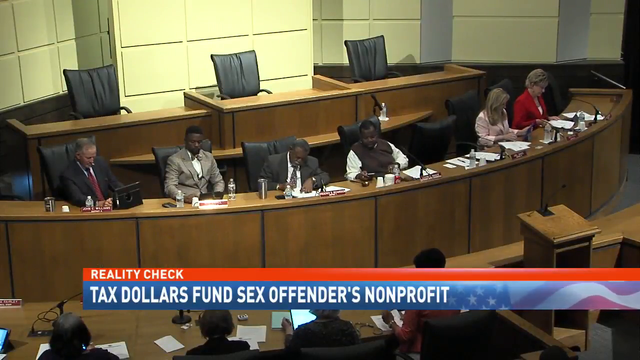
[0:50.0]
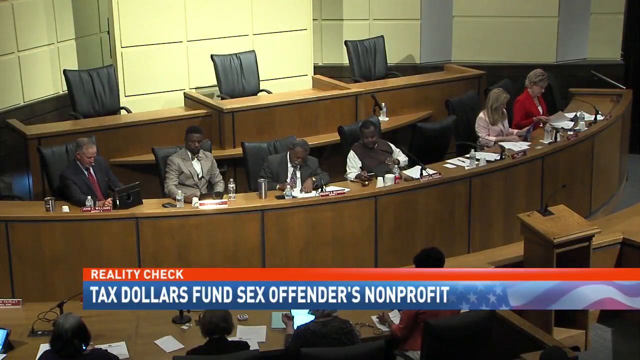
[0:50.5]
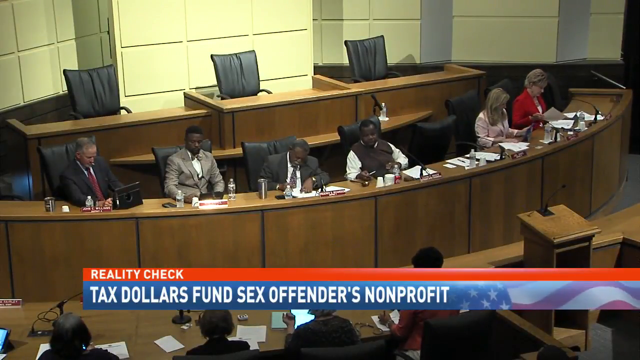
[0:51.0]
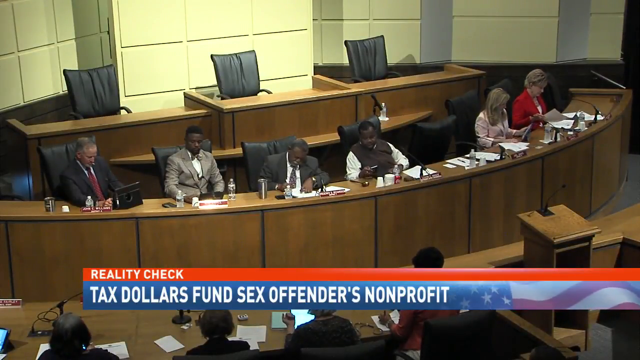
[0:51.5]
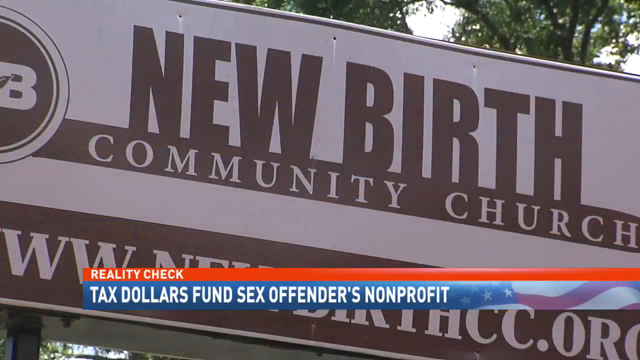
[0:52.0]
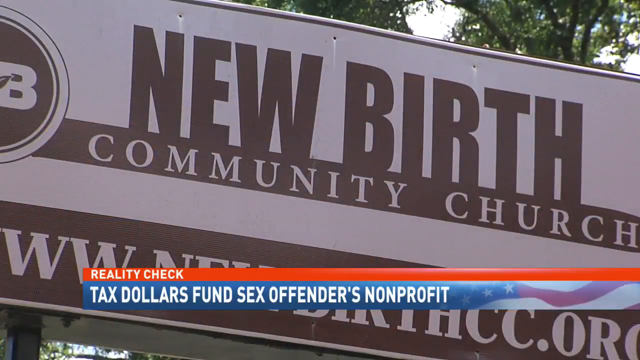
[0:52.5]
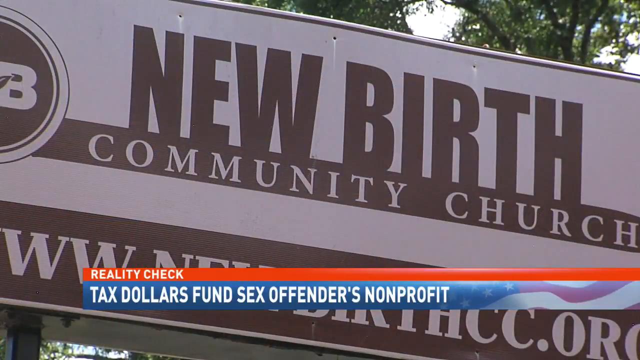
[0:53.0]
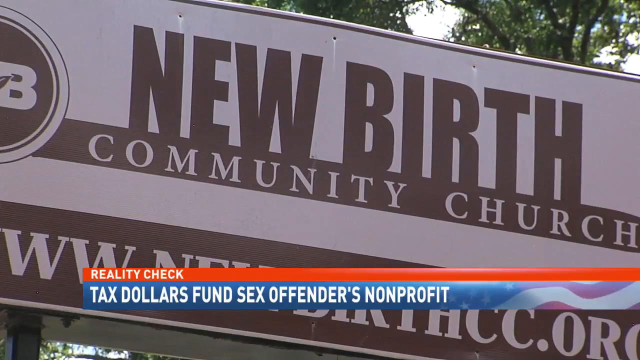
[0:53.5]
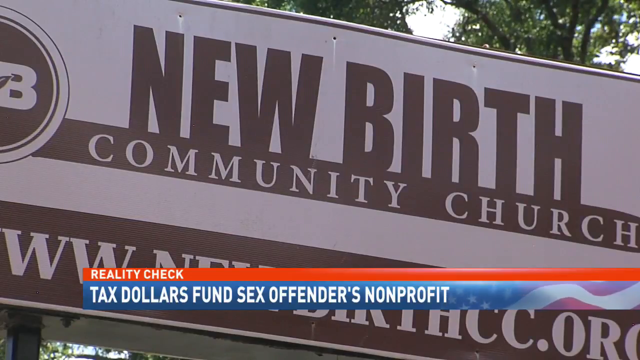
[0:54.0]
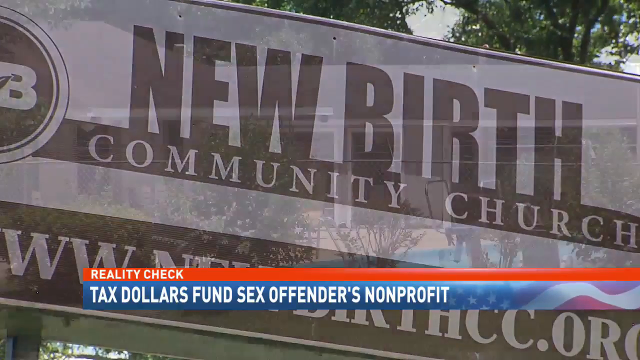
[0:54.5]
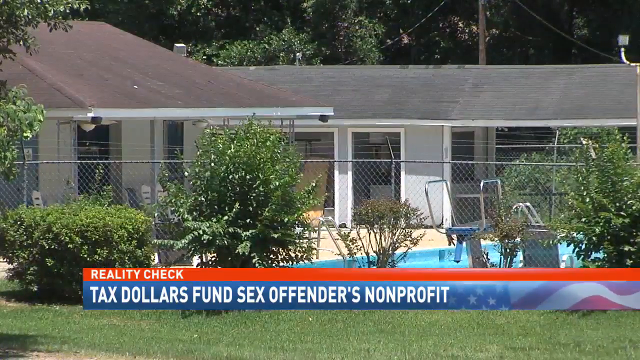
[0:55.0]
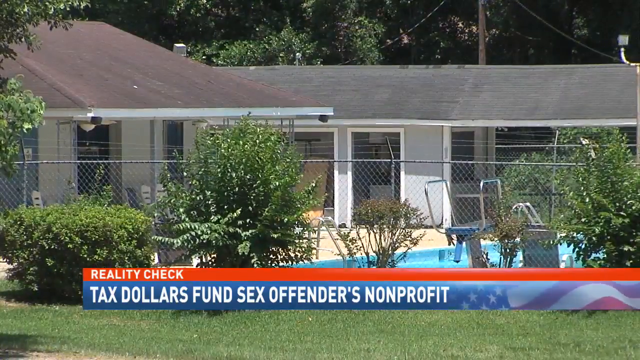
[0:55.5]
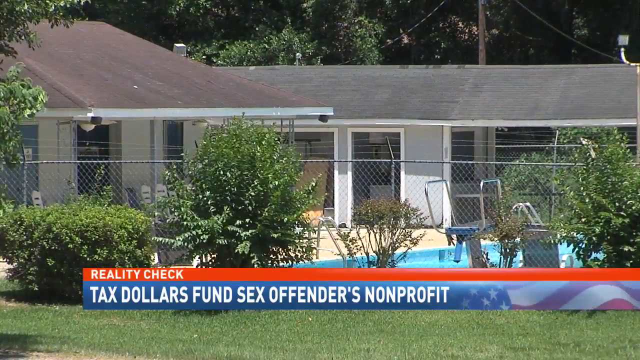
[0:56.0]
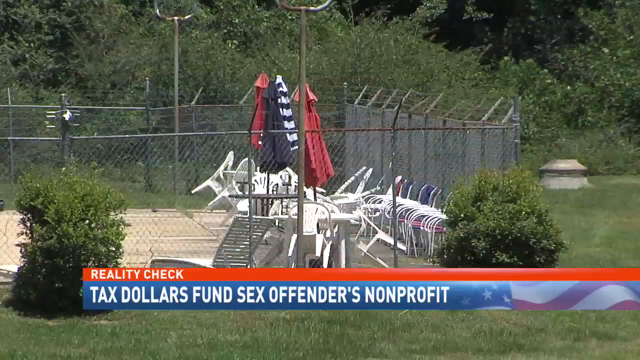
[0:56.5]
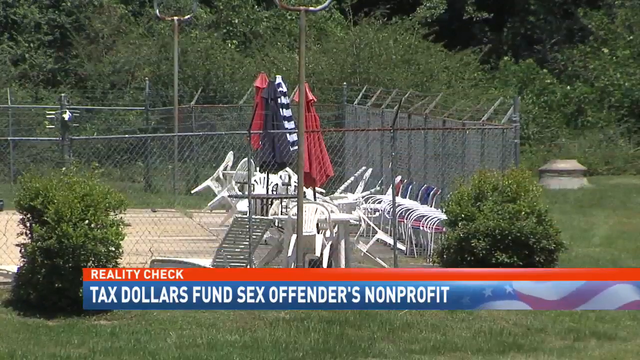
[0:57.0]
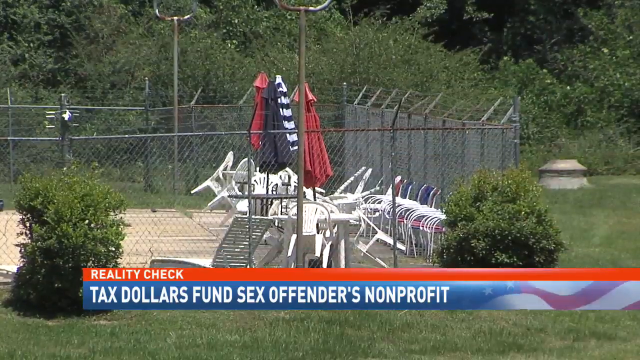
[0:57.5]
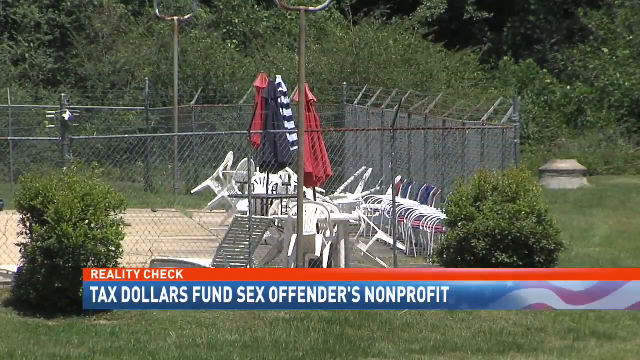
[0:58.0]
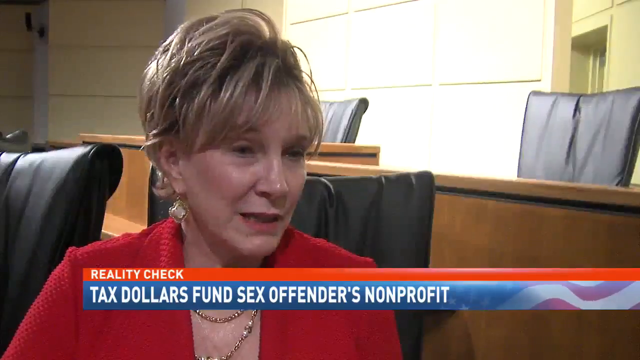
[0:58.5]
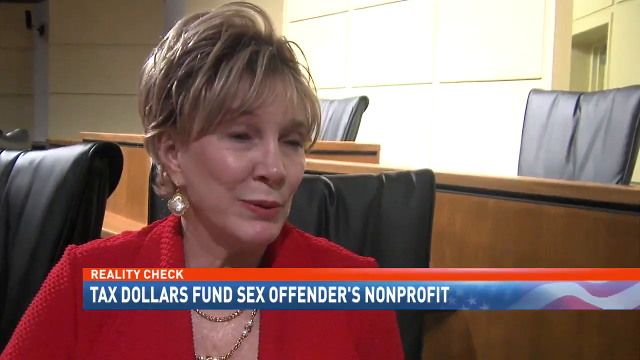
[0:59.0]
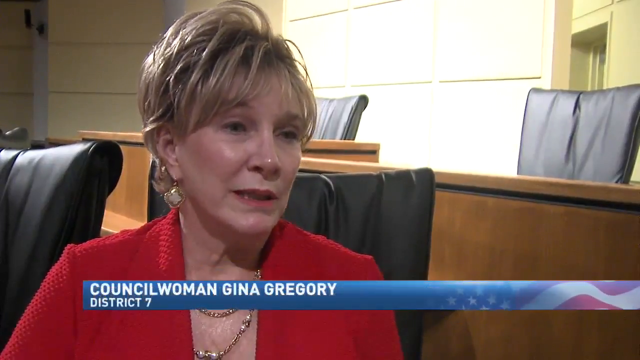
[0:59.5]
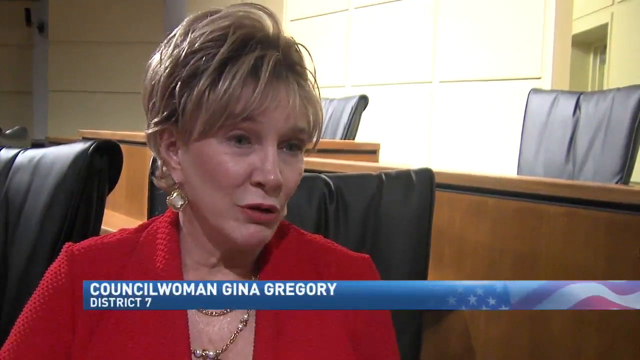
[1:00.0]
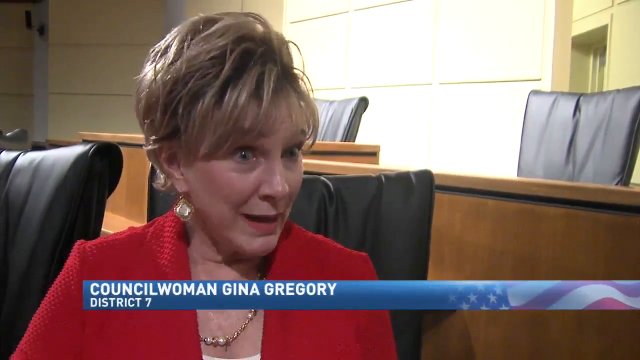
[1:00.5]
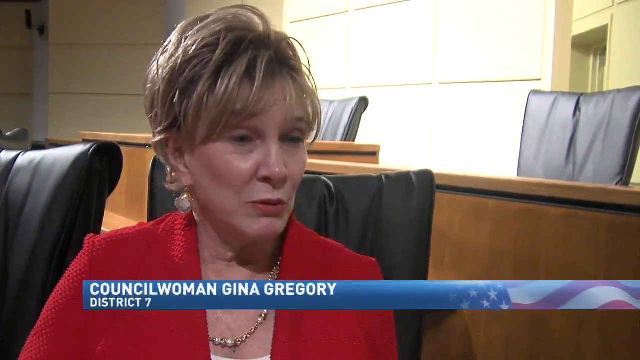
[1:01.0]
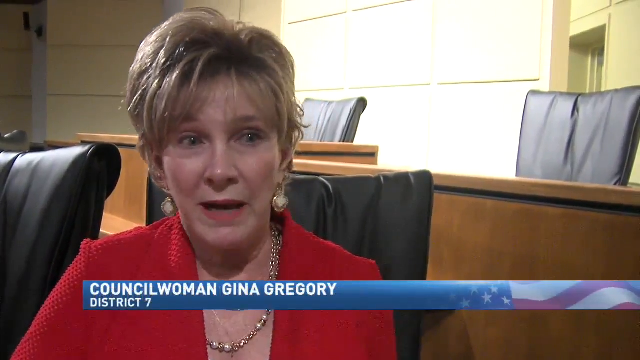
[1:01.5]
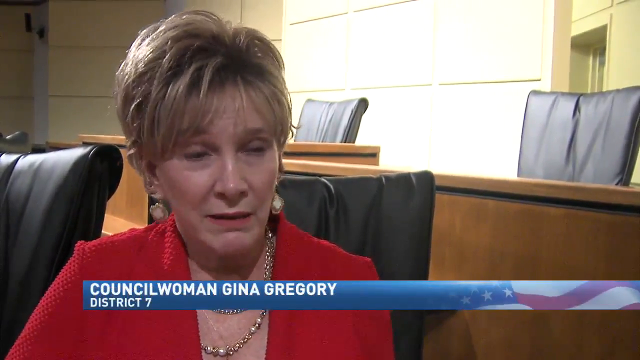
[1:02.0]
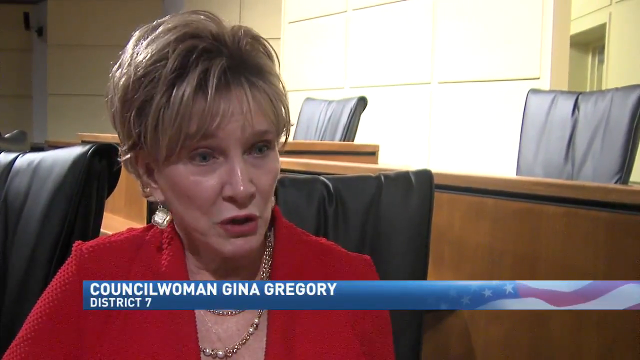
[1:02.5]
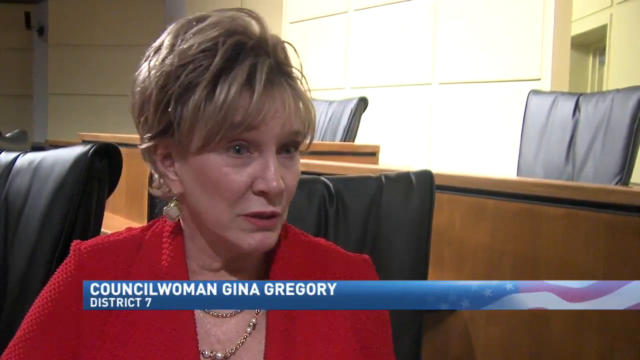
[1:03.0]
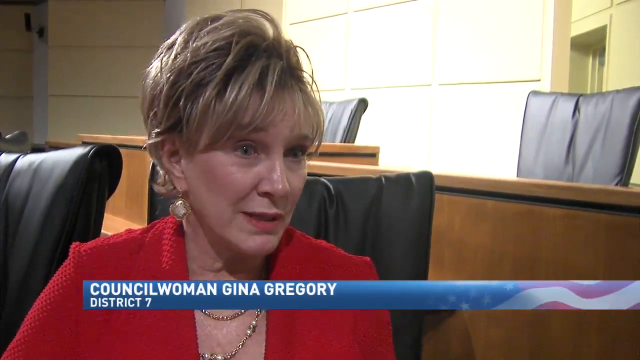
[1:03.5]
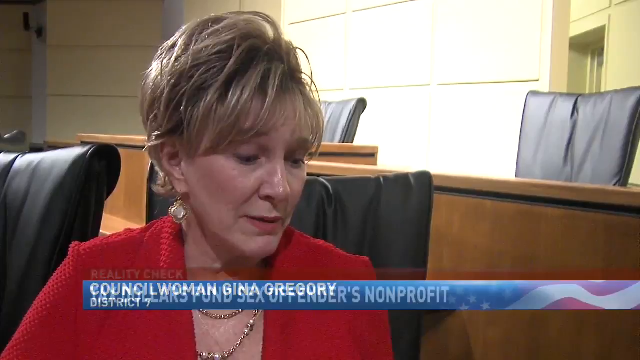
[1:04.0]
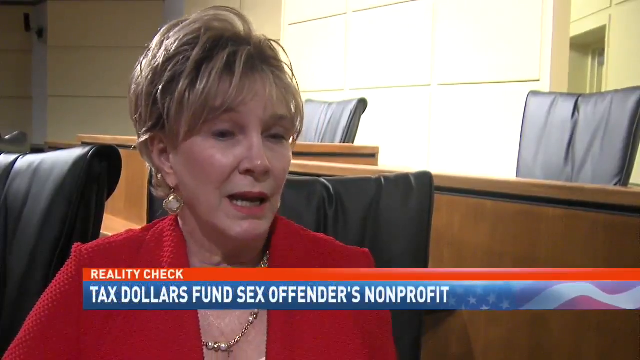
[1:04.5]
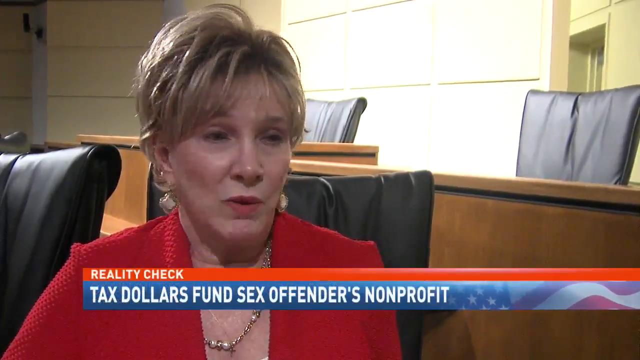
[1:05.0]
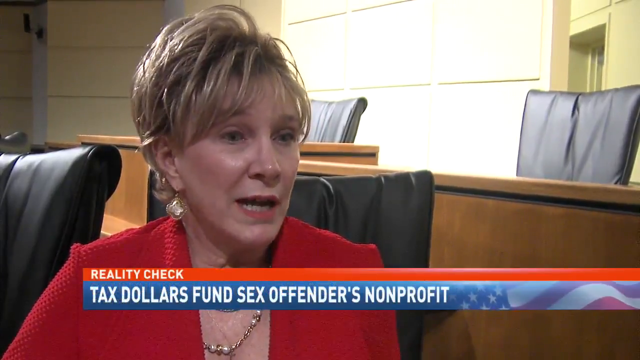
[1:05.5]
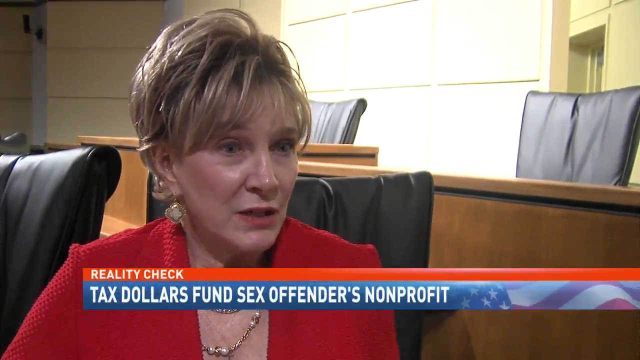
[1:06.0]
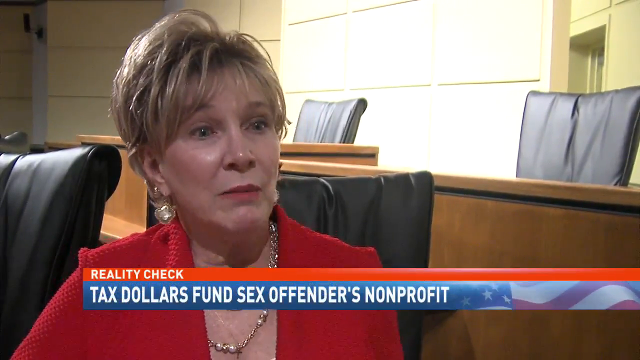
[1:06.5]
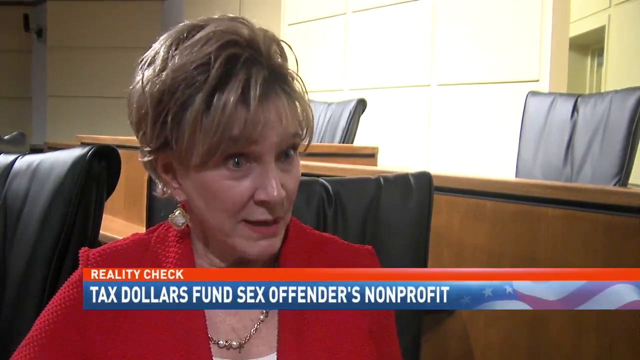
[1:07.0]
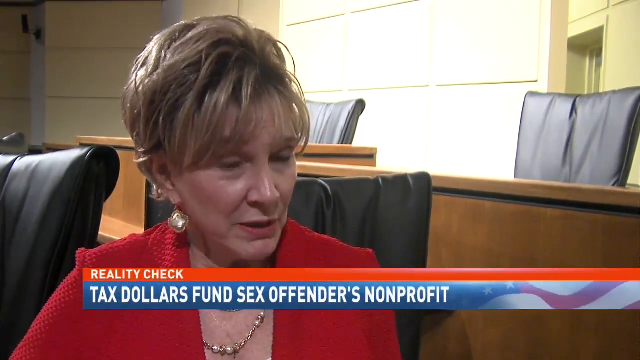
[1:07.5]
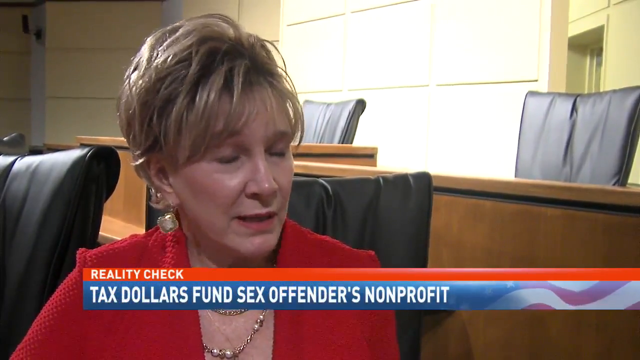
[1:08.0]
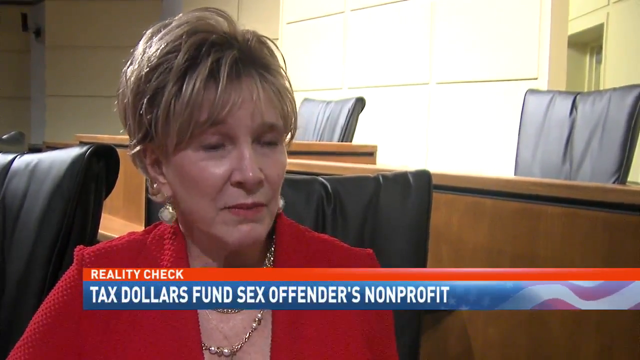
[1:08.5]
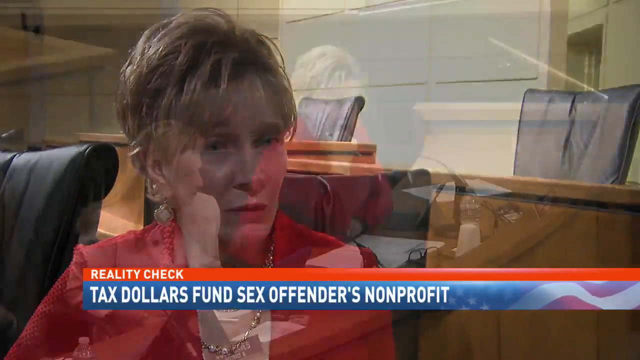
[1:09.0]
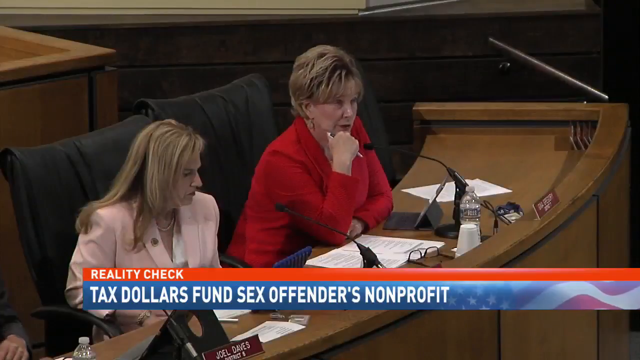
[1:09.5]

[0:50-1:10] Six people sit in front of a large wooden podium in what looks like a government council meeting. The first is an apparently older Caucasian man in a suit and red tie. The second, of African American descent, wears a gray bow tie and a gray formal suit. The third, an older African American man, wears a green polka dot tie and a dark gray suit. The fourth, of African American descent, wears a brown vest over a white button-down. Next is an empty seat, then a woman in a pink suit with blonde hair, and lastly an older Caucasian woman in a red suit with glasses and short blonde hair. Behind them are three separate councilman chairs, and in the foreground three people are typing at what looks like a council meeting. The scene changes to a New Birth Community Church sign, then switches back to the pool scenes. The woman in red with short blonde hair, wearing red lipstick, appears with the text "Councilwoman Gina Gregory from District 7," speaking toward the camera, nodding her head and commenting.